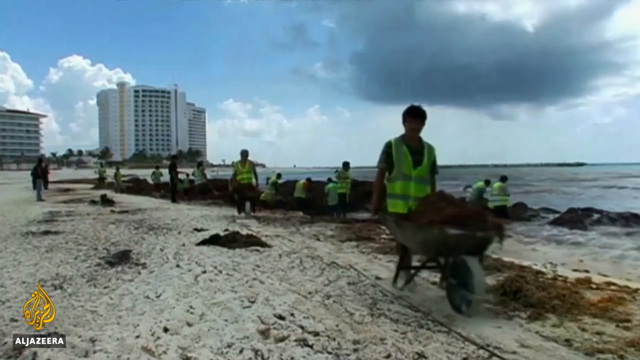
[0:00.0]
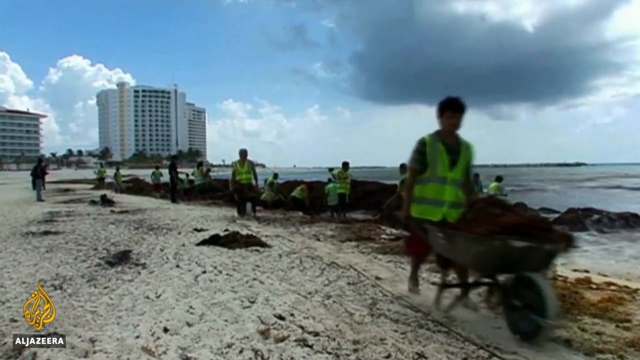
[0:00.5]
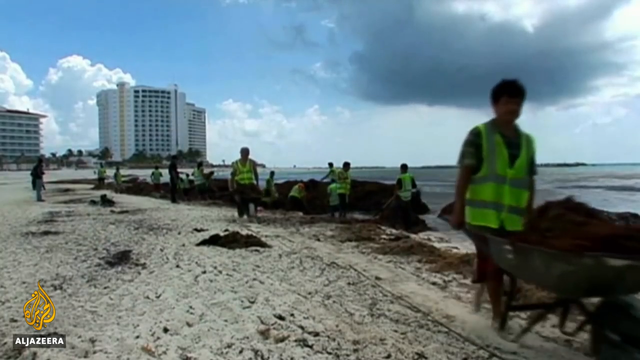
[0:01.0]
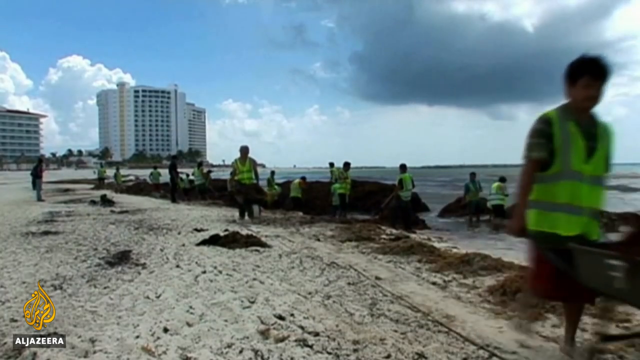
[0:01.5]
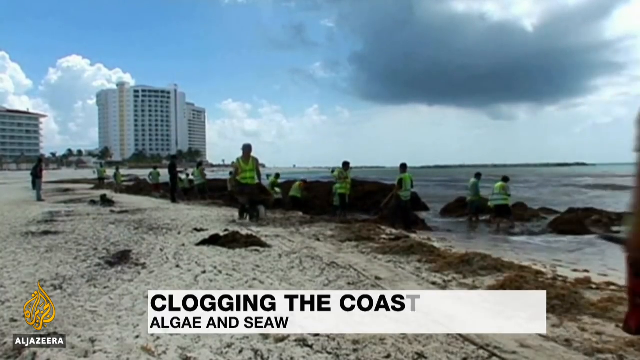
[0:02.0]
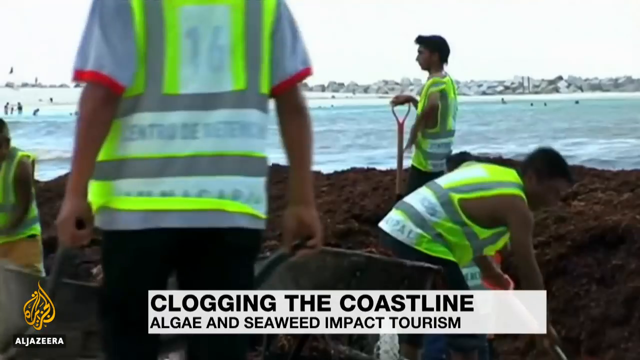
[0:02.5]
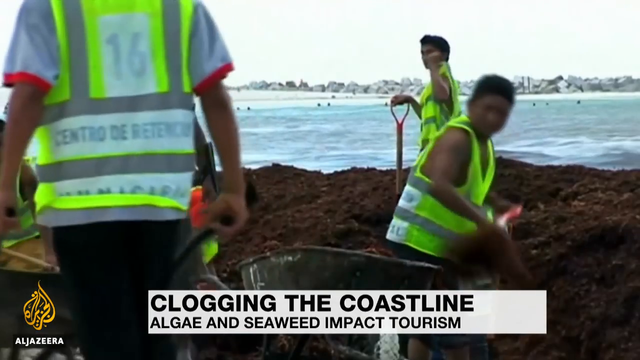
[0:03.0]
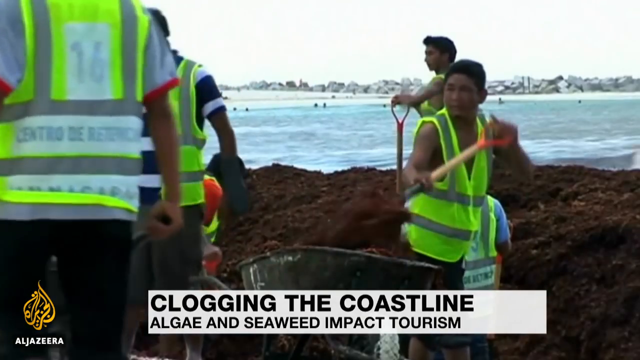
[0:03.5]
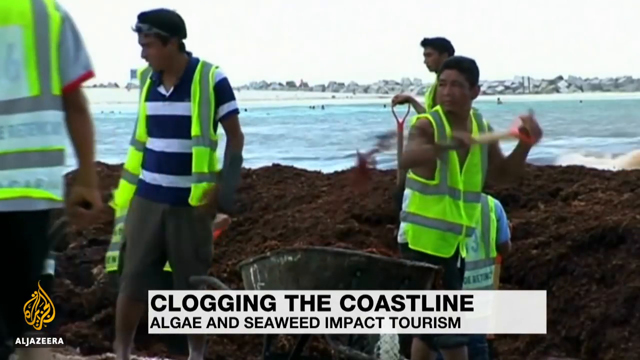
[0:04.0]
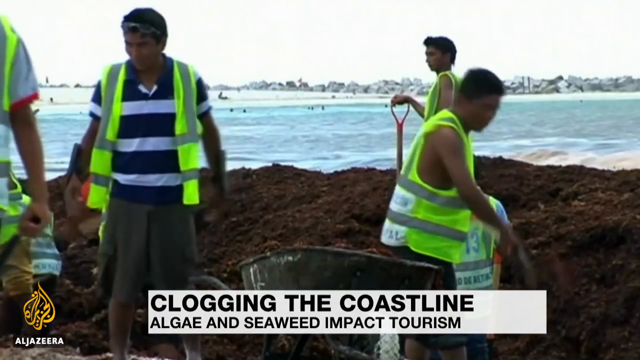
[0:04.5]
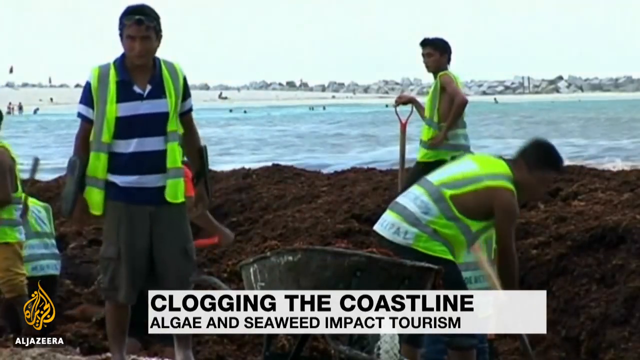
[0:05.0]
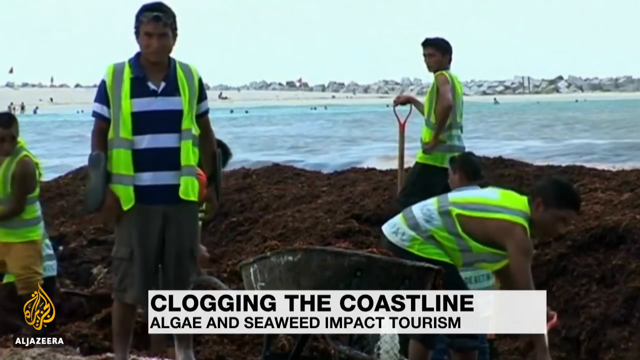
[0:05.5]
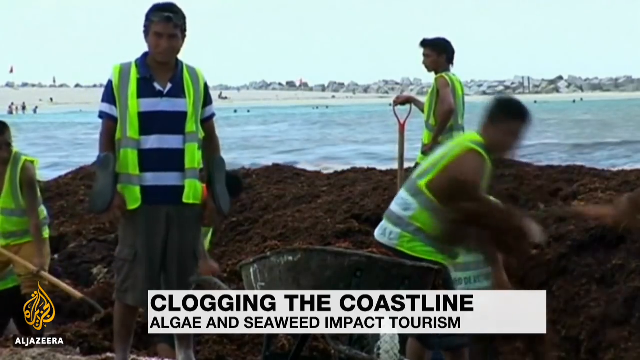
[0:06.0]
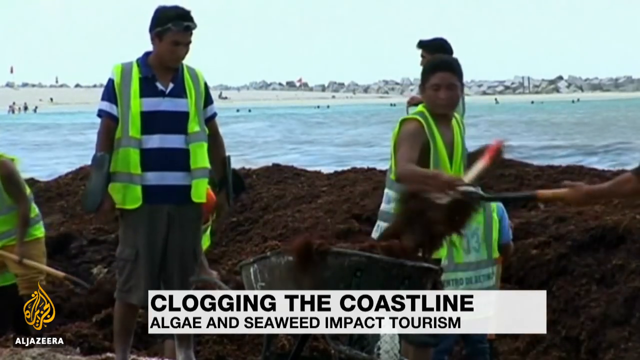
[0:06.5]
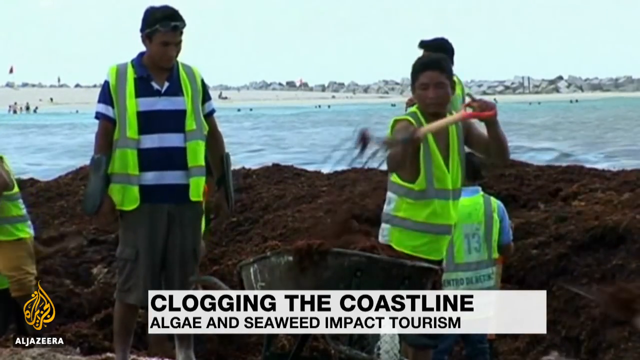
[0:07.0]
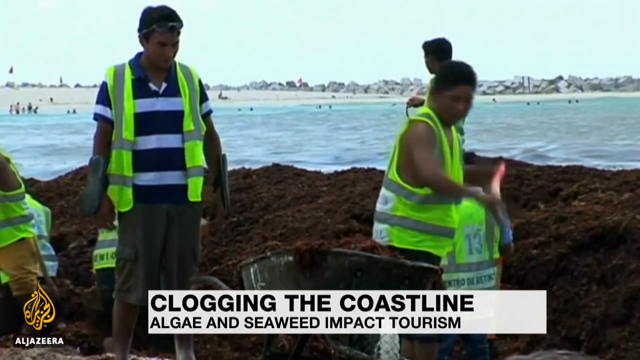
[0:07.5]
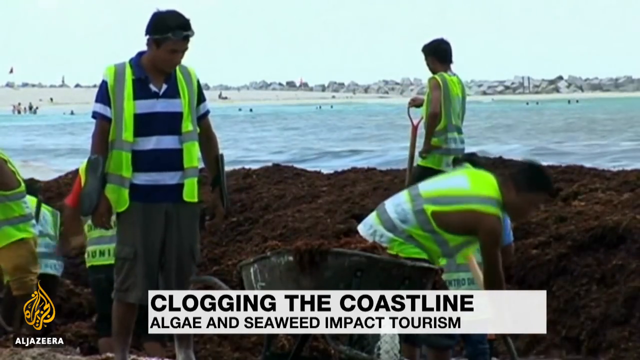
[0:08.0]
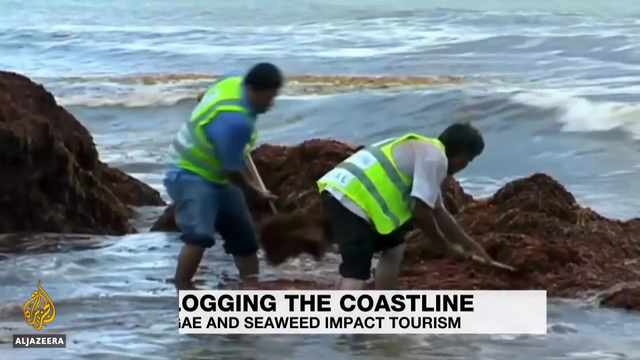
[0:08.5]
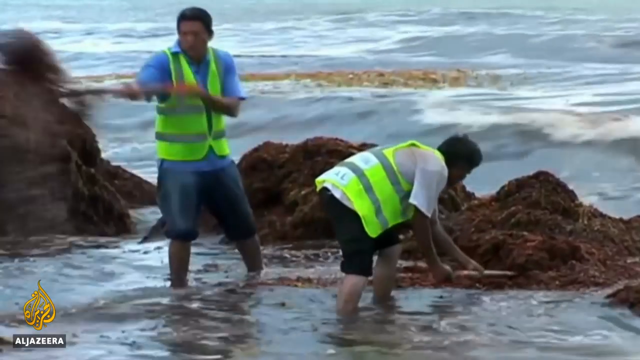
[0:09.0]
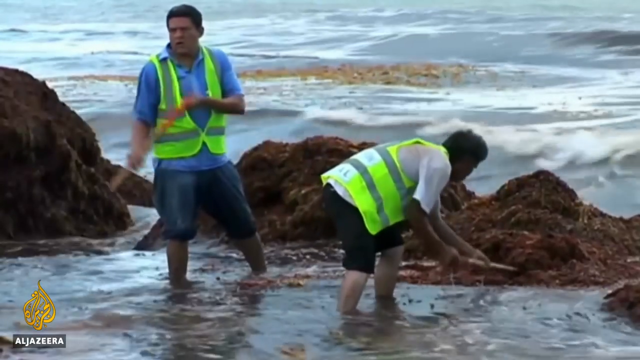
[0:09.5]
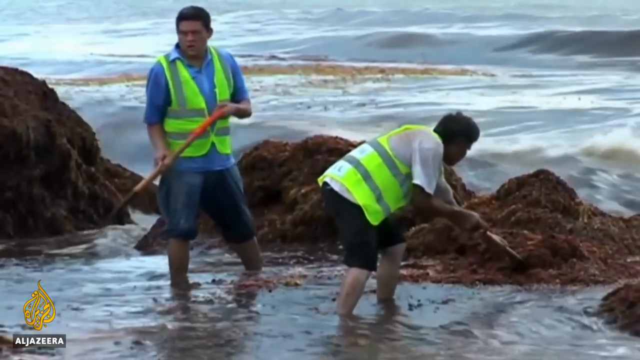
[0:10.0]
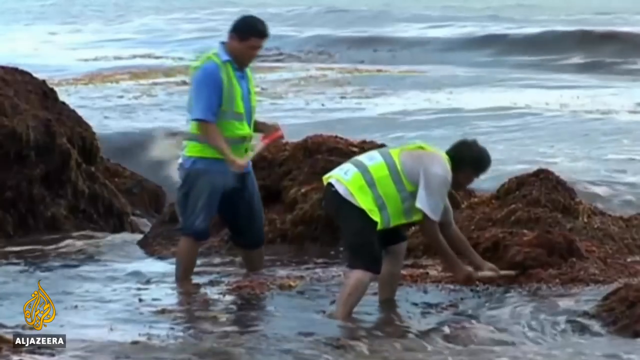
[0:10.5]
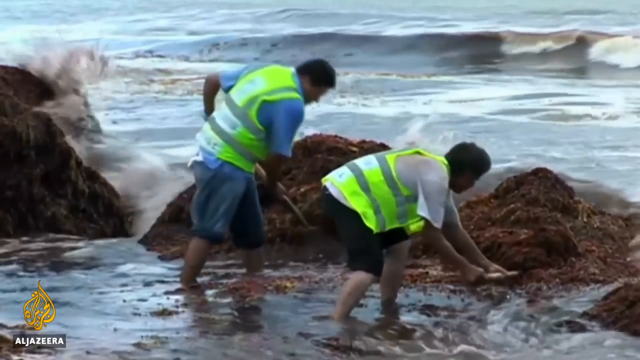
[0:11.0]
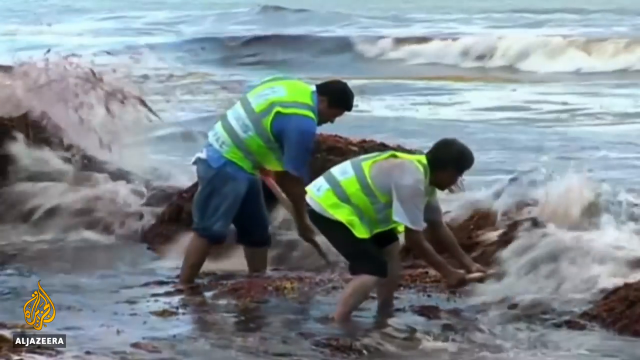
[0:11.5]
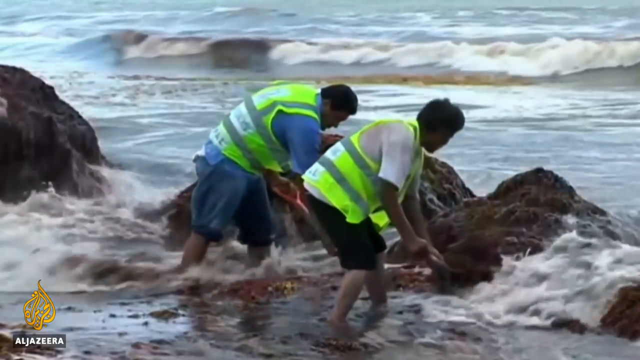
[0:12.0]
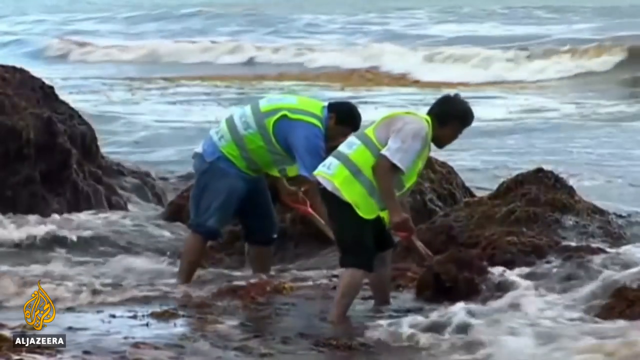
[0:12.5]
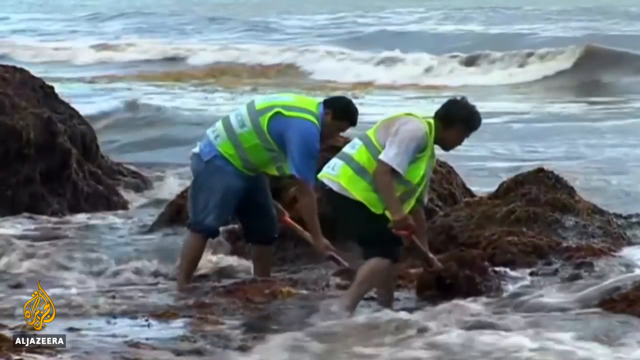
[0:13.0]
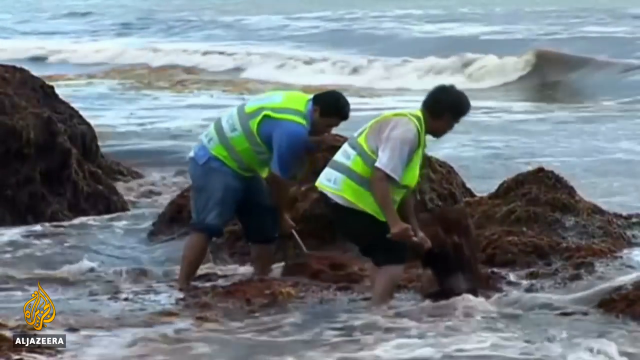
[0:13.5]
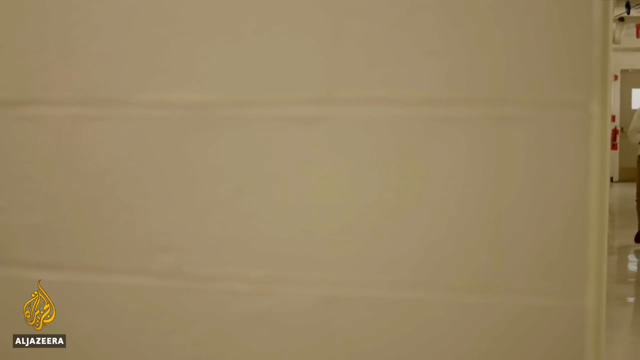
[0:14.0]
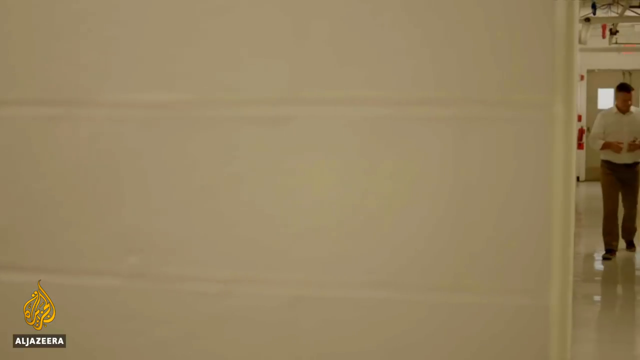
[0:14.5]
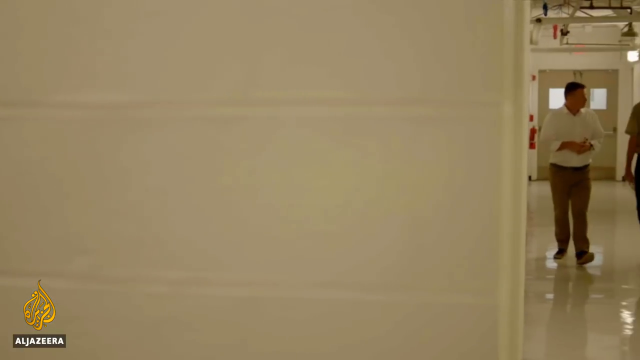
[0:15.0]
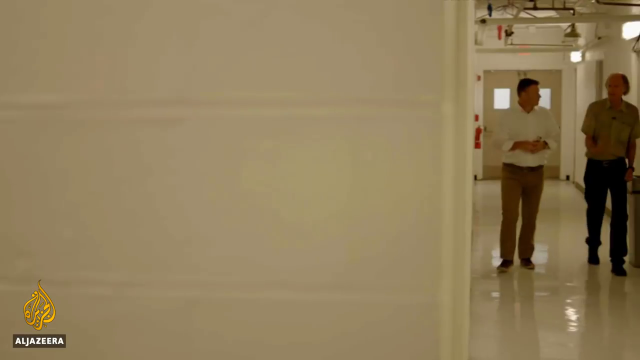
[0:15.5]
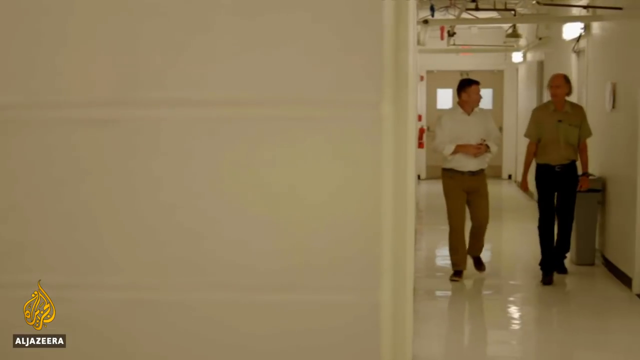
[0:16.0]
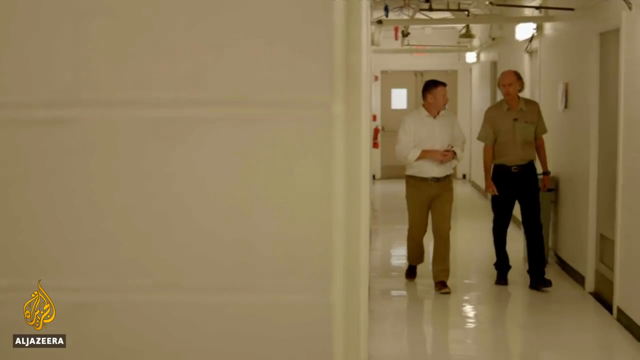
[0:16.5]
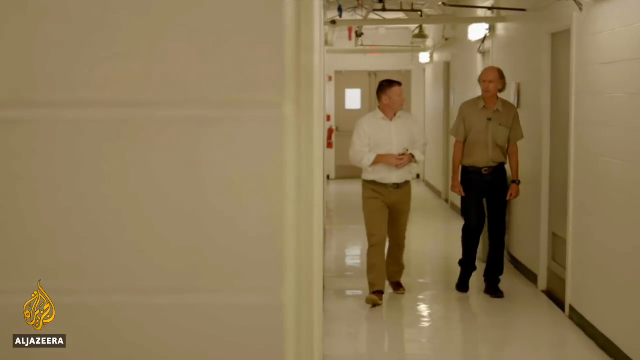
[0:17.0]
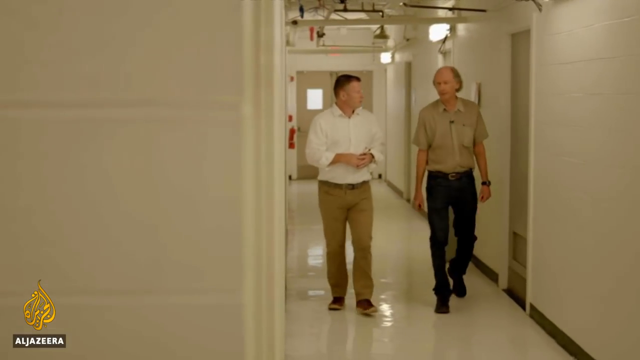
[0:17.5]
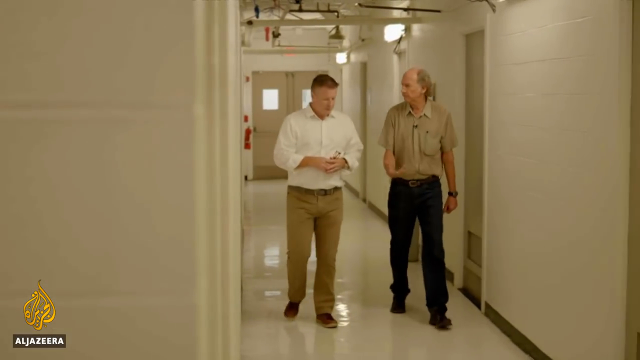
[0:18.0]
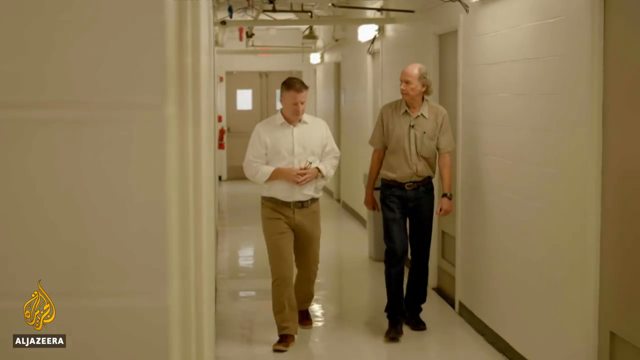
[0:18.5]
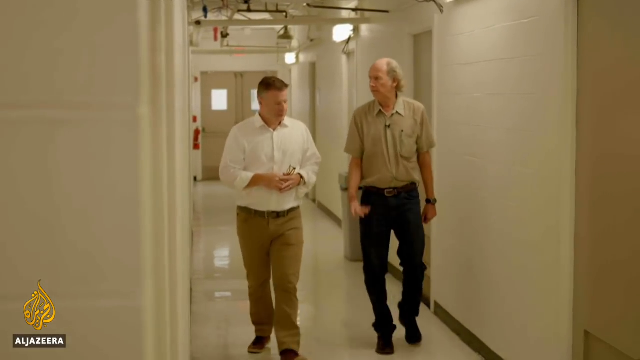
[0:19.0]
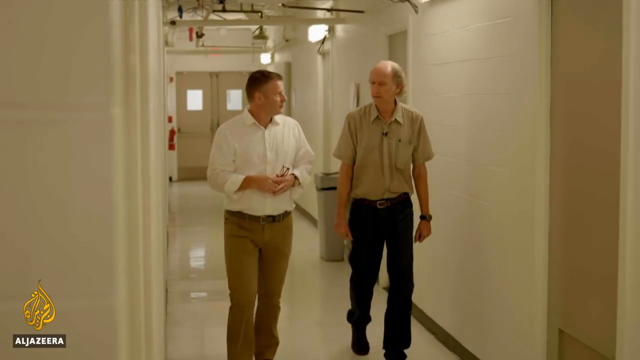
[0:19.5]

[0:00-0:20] A very blue sky fills the background, with big fluffy clouds on the left and two or three tall white buildings in front of them. On the right is one darker cloud, kind of like a rain cloud. The scene is a beach, with water on the right and sand on the left, covered in brown material. Twelve or thirteen people in yellow vests are cleaning up, and one person walks away with a wheelbarrow toward the bottom right of the frame. Text in black on a white background appears, including the words "clogging the coastline" and "algae and seaweed impact tourism." People scoop the material into a wheelbarrow, some stand around taking a breath, and others scoop with what look like pitchforks. The video cuts to a shot of a large pile of the material, then to an interior shot of two white men walking down a stark white hallway toward the camera. The man on the left has more hair and wears a white shirt and tan pants; the man on the right is bald on top with salt-and-pepper hair on the sides and wears a tan shirt and blue pants.